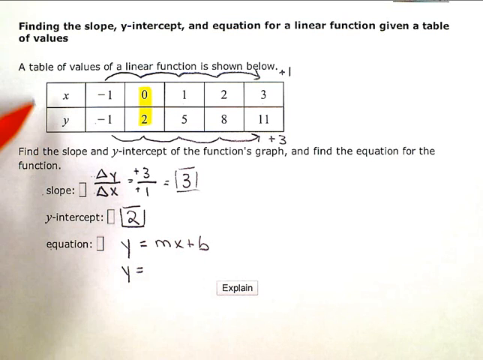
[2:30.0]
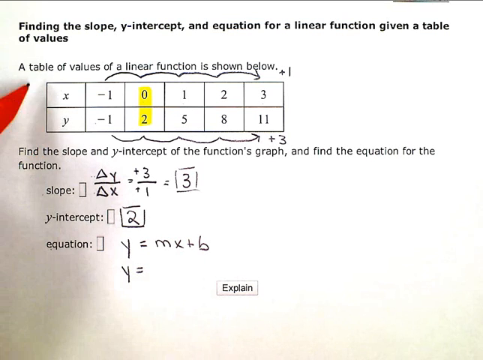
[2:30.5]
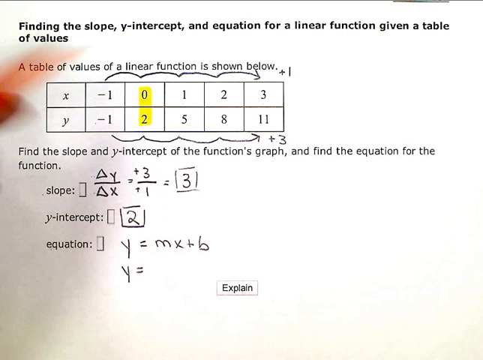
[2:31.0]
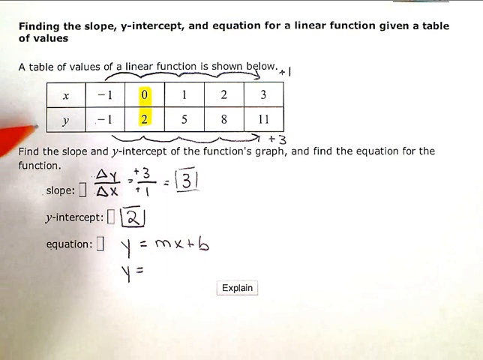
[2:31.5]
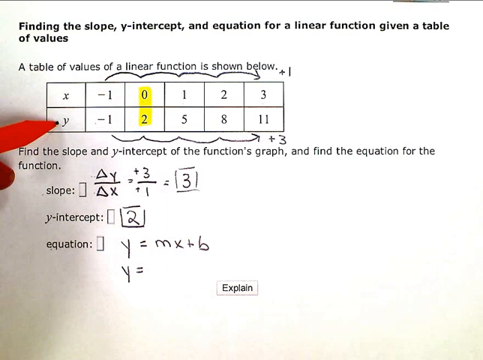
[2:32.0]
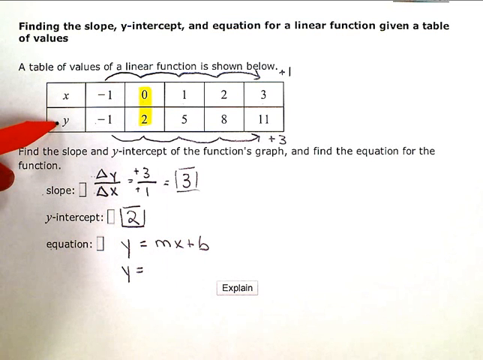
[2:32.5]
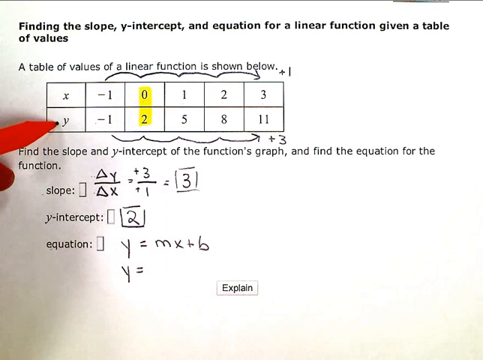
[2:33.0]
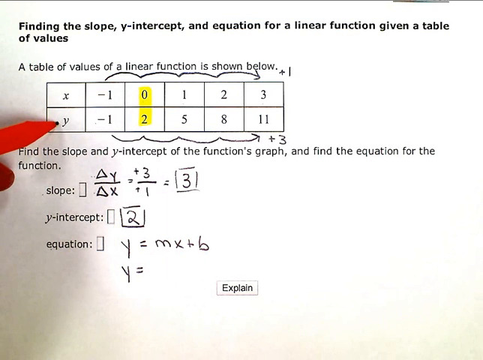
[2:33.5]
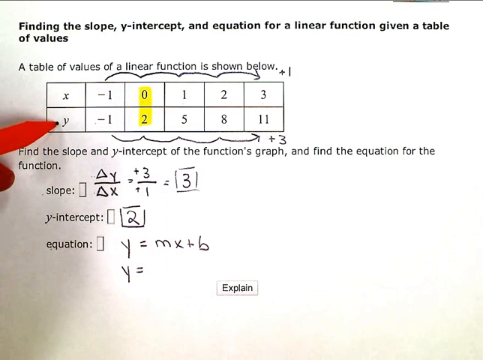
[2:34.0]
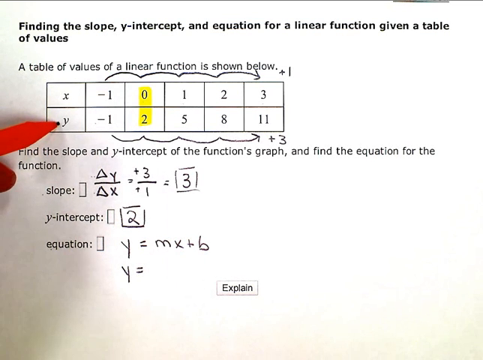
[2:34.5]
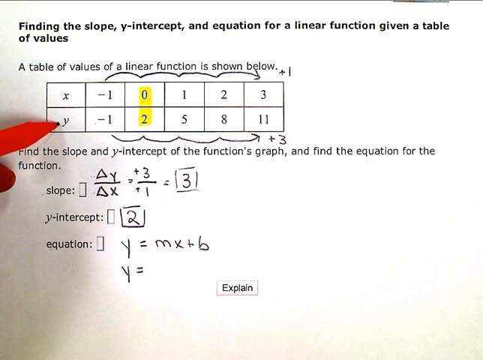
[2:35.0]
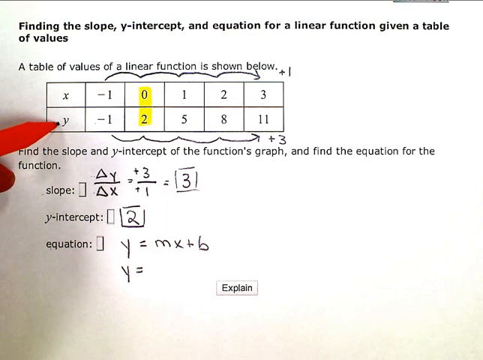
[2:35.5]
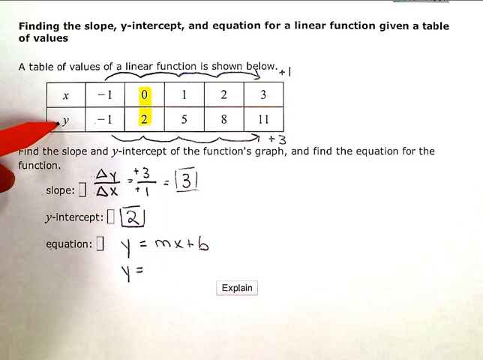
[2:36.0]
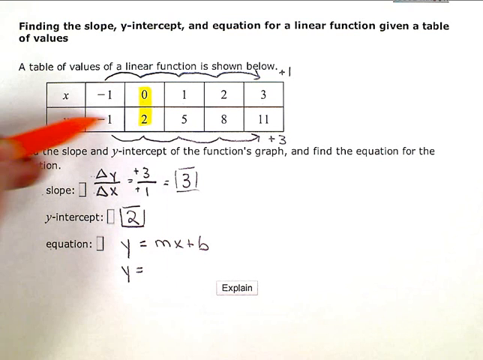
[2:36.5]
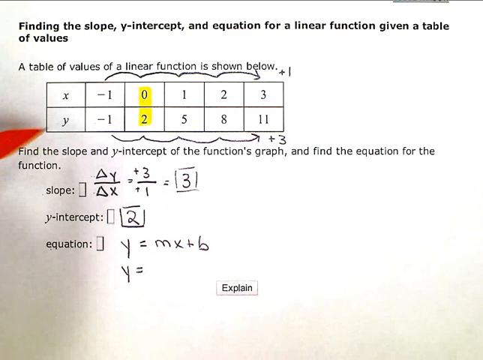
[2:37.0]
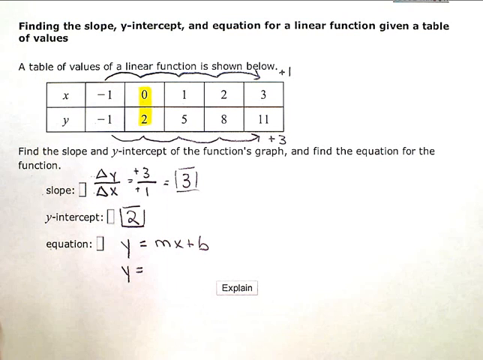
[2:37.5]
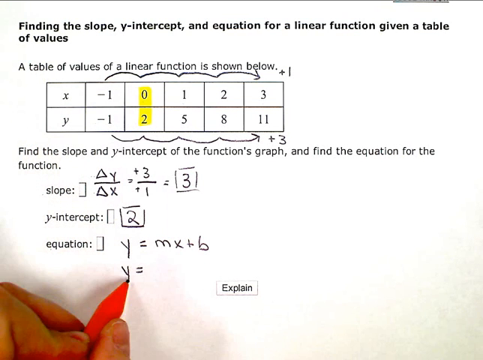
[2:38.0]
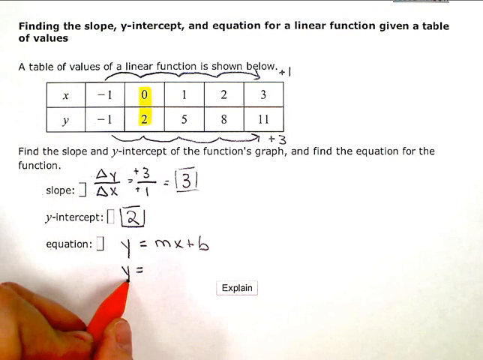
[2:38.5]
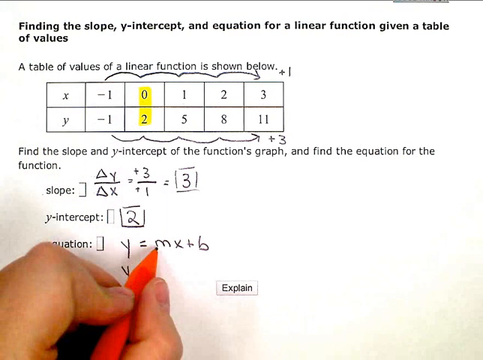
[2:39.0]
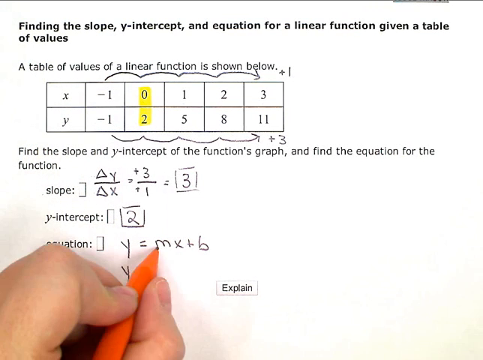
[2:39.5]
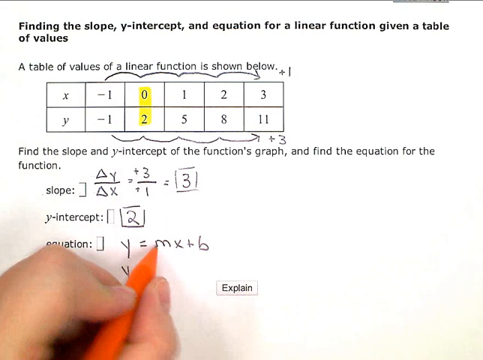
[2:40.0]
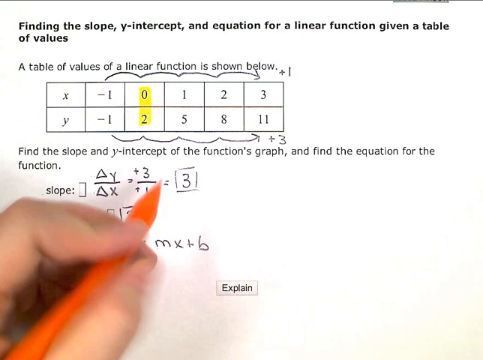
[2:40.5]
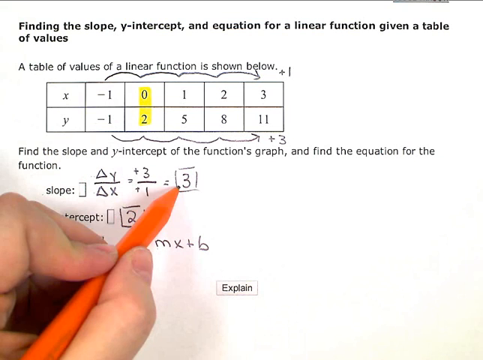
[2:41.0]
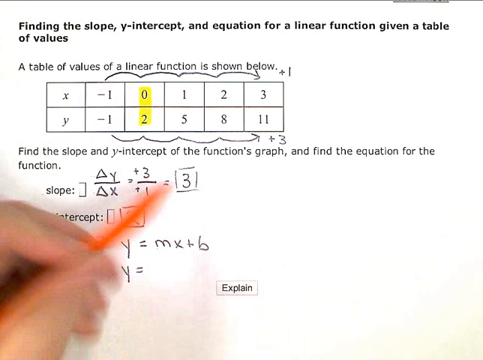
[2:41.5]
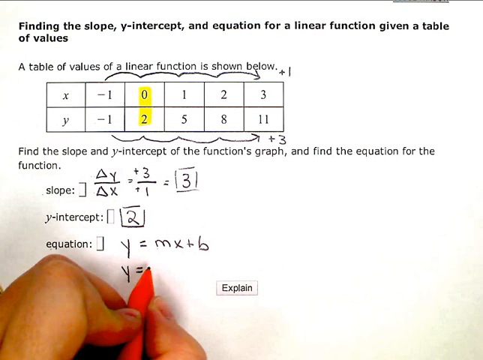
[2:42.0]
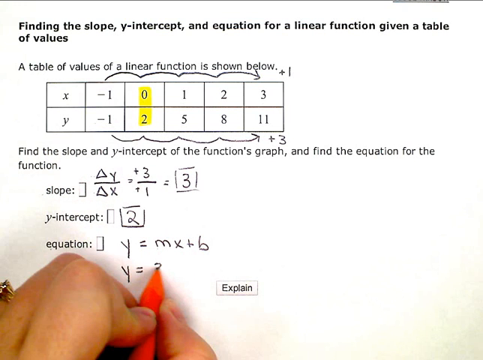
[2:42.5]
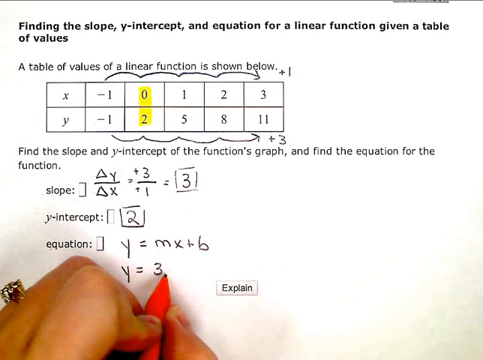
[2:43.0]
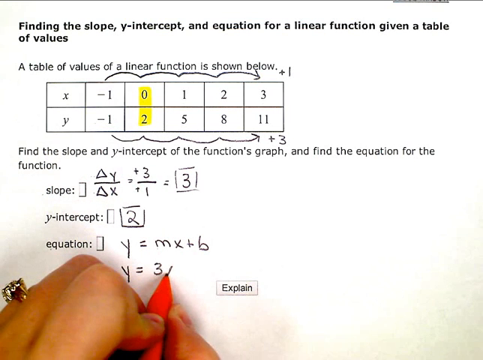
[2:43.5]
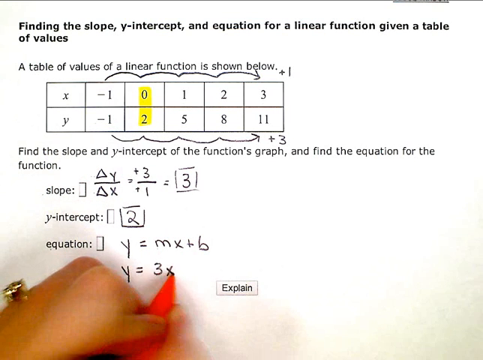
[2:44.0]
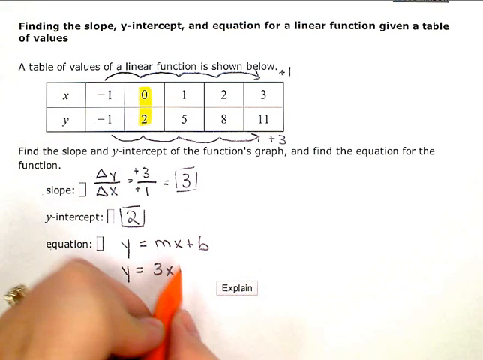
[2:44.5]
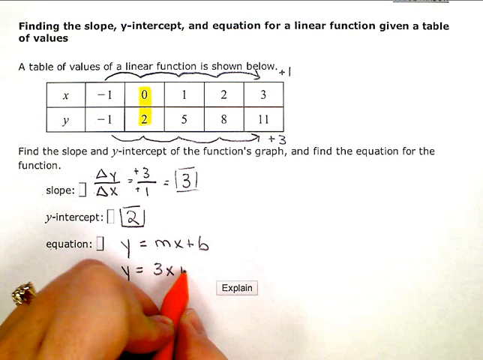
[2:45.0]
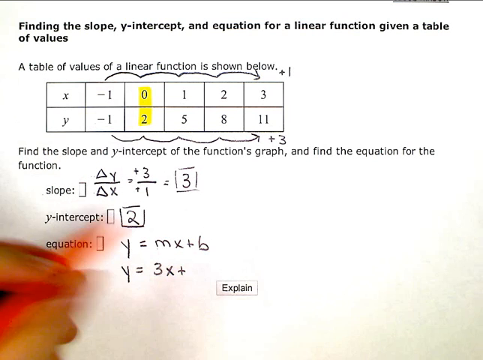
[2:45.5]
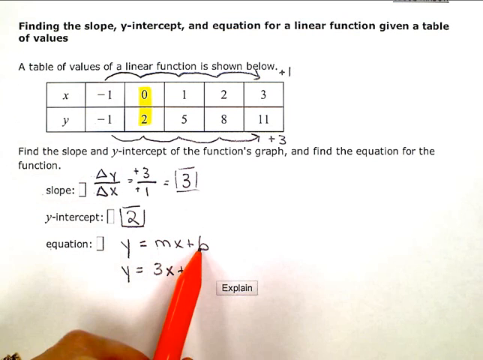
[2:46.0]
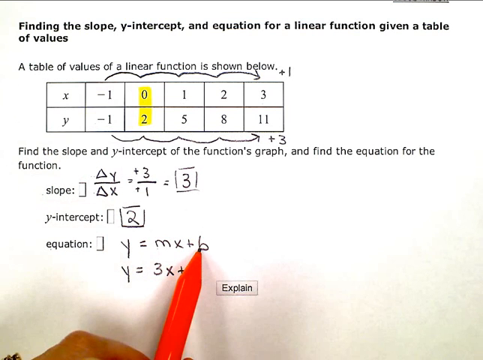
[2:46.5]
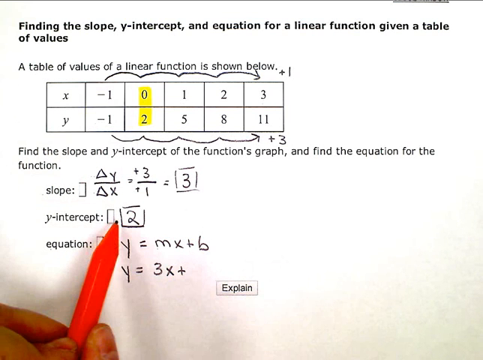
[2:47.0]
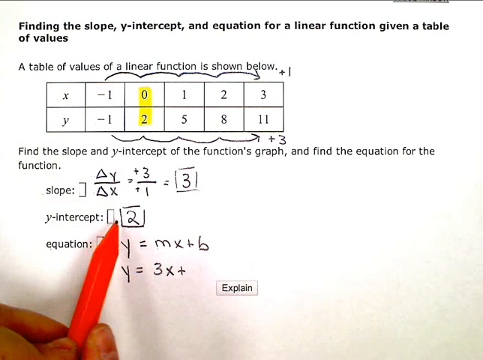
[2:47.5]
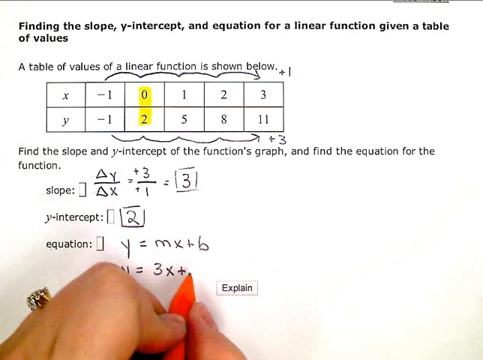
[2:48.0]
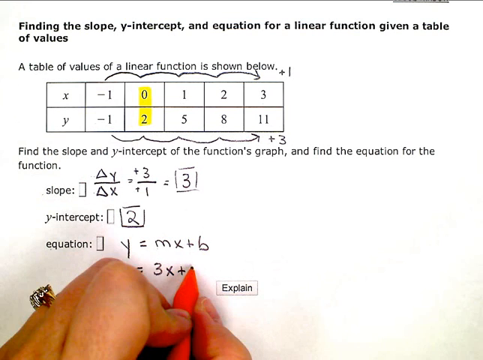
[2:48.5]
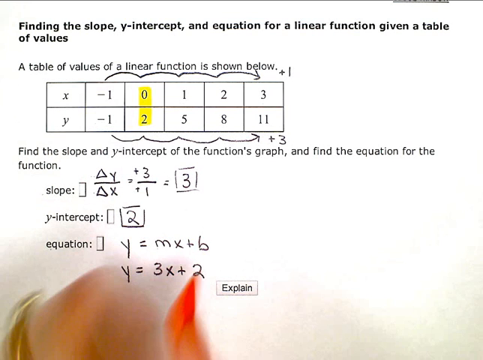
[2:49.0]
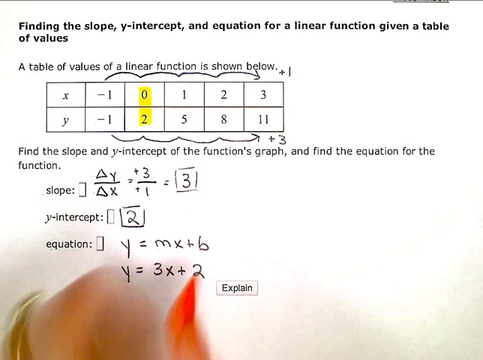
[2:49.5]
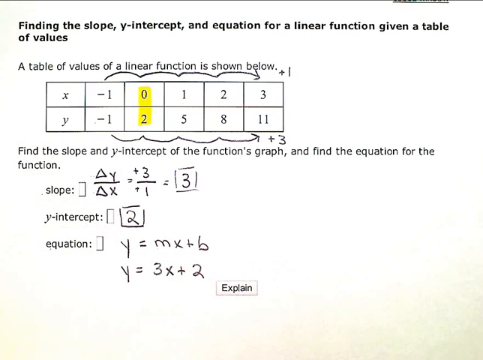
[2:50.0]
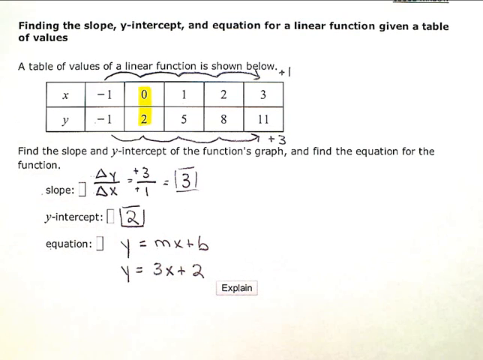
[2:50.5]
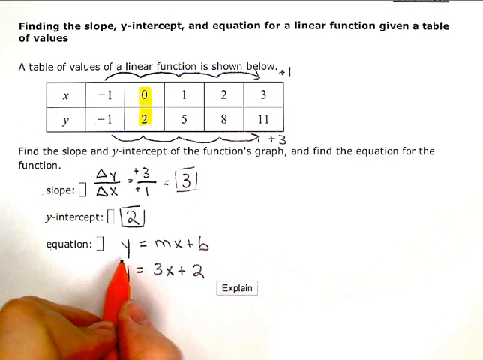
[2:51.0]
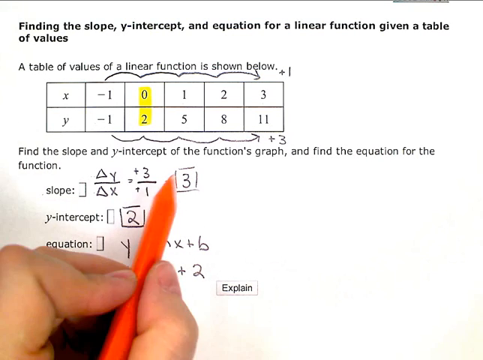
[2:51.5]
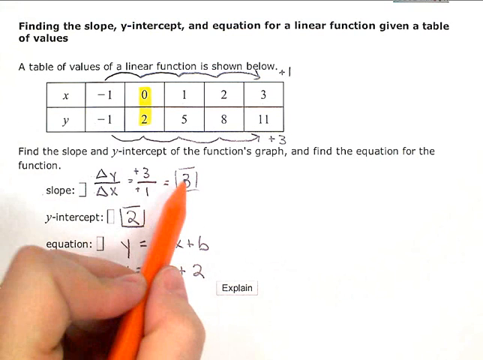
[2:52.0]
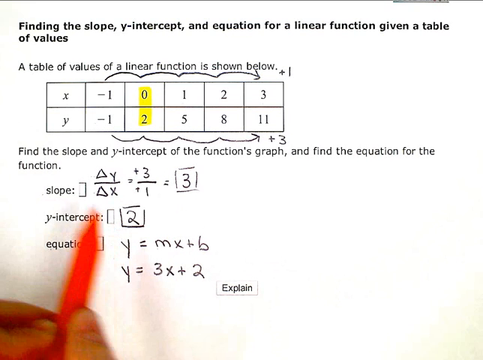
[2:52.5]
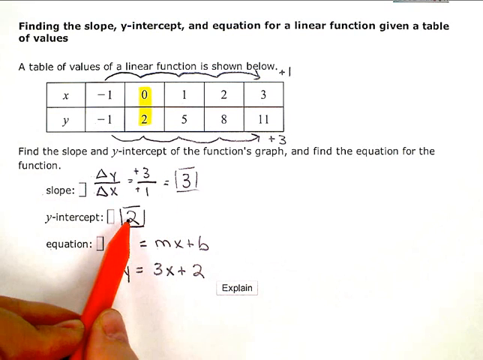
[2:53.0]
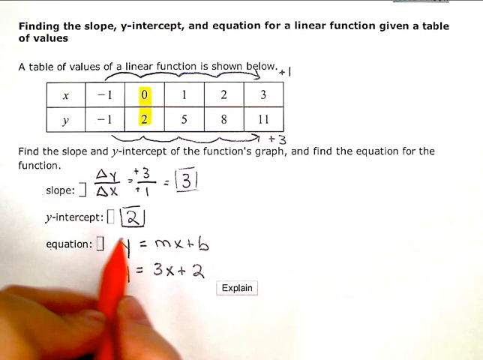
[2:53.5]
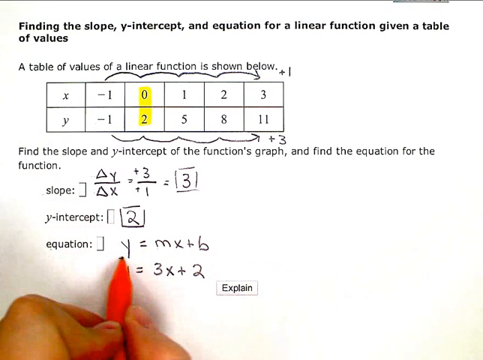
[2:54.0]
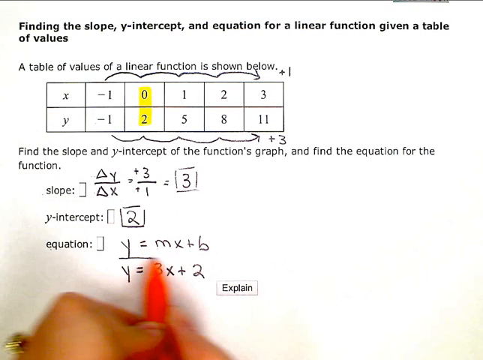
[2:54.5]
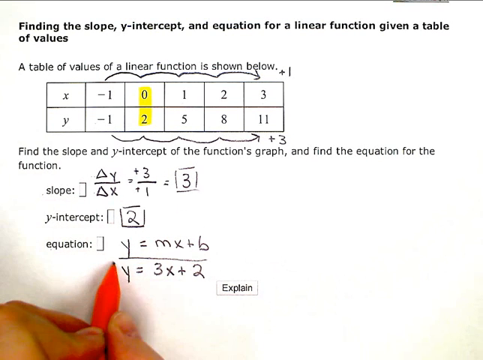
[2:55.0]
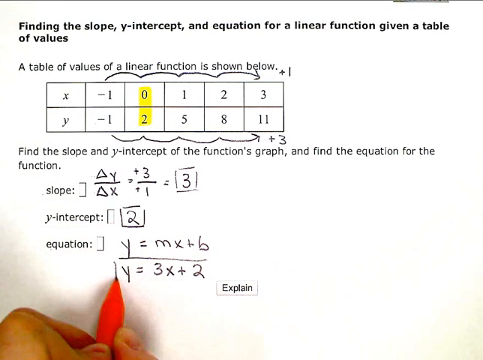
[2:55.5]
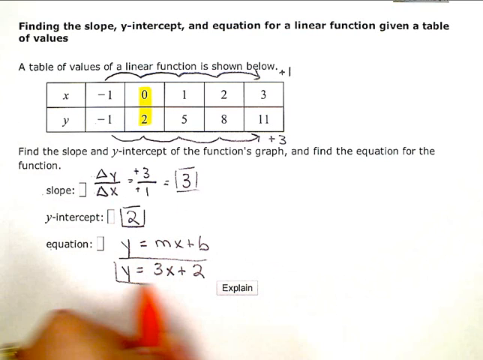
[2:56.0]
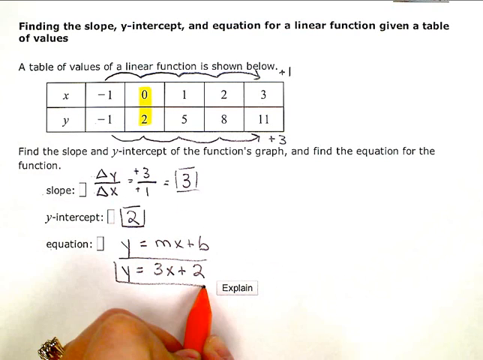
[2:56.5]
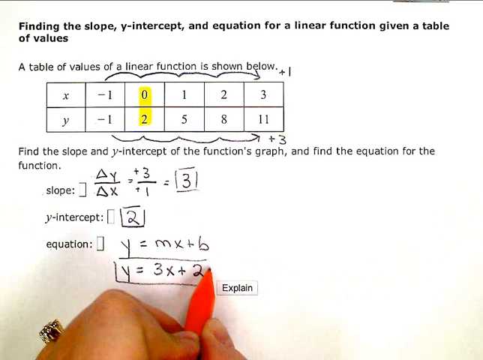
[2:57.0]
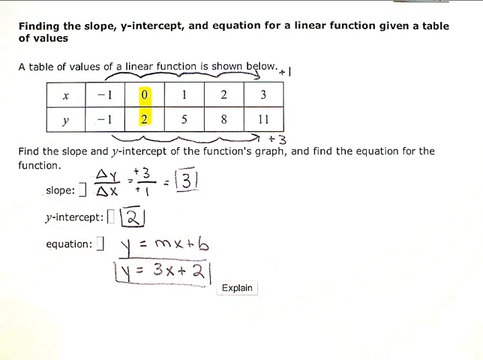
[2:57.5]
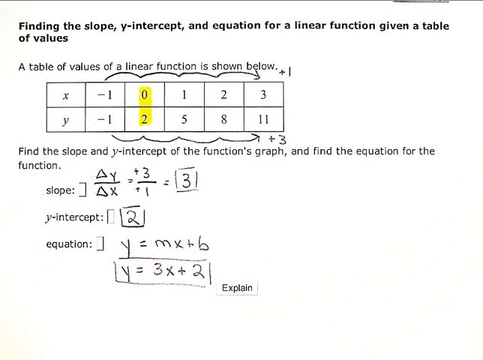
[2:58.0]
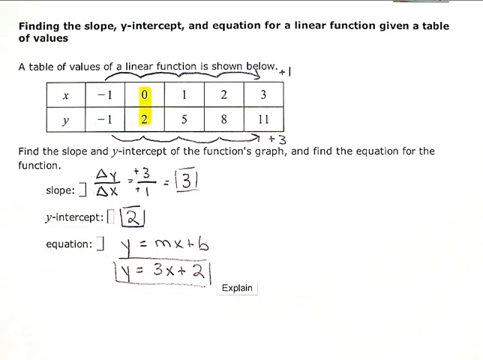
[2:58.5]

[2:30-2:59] The assignment "finding the slope, y-intercept, and equation for linear function given a table of values" is on screen, with a table of values of the linear function below. The x values are -1, 0, 1, 2 and 3, each next one increasing by 1, and the y values are -1, 2, 5, 8, 11, each increasing by 3. Below is "find the slope and y-intercept of function graphs and find equation for this function". The slope is delta y divided by delta x equals +3 divided by +1 equals 3, with the 3 marked in a box; the y-intercept is 2, also in a box. For the equation, y = mx + b is shown, followed by y = 3x + 5 from the slope and y-intercept, and the whole thing is put in a box. An explain button is at the bottom.